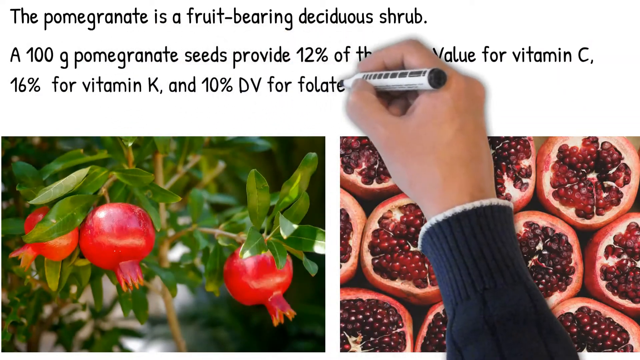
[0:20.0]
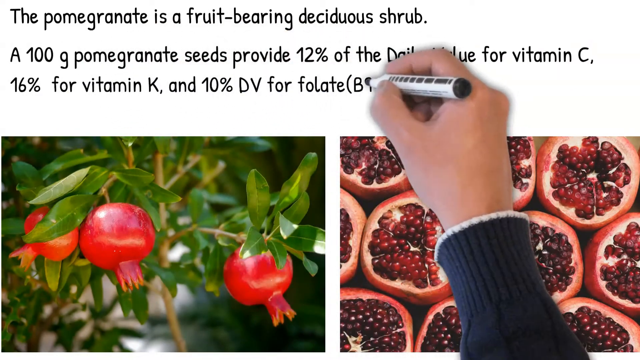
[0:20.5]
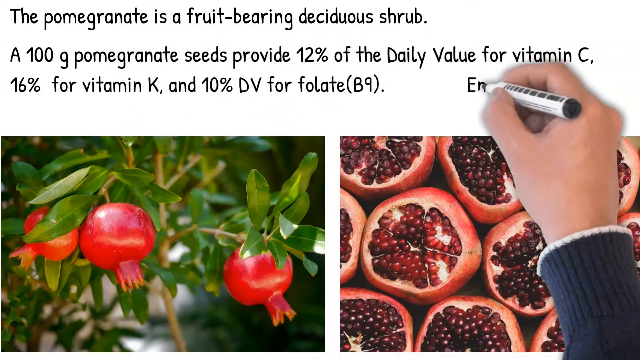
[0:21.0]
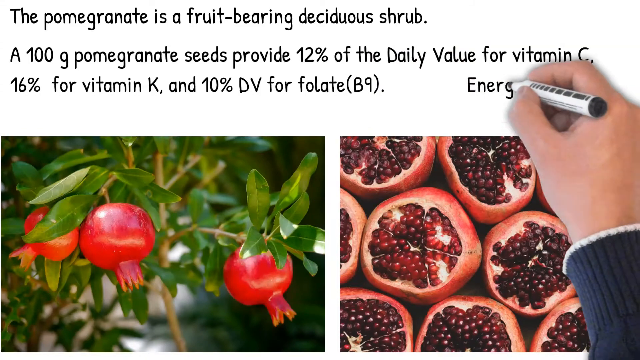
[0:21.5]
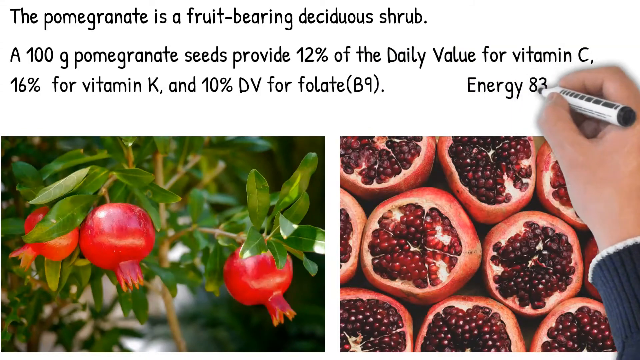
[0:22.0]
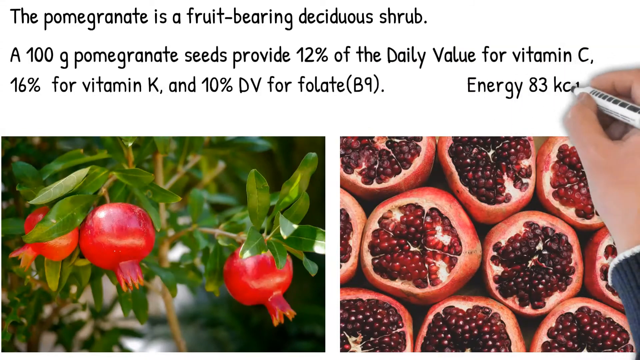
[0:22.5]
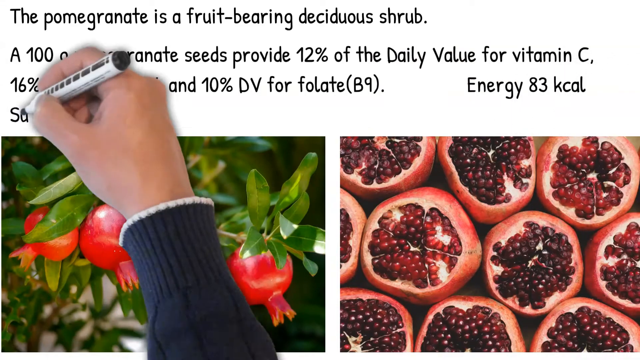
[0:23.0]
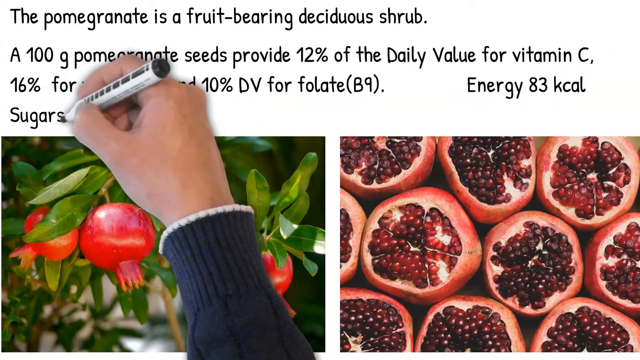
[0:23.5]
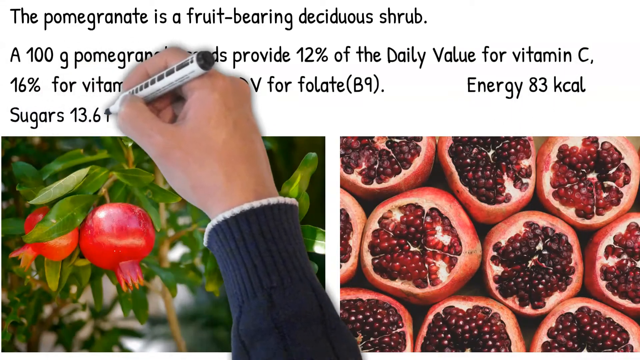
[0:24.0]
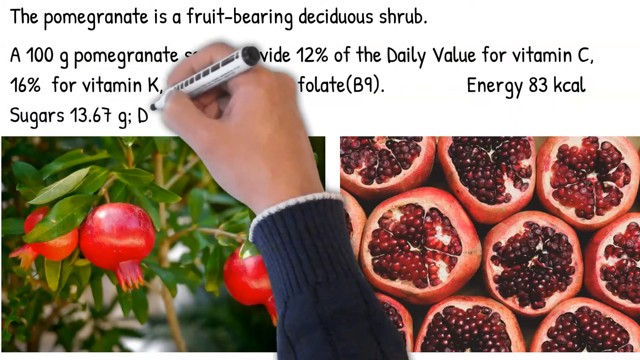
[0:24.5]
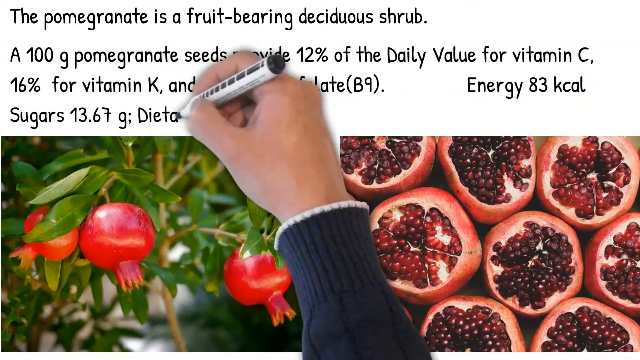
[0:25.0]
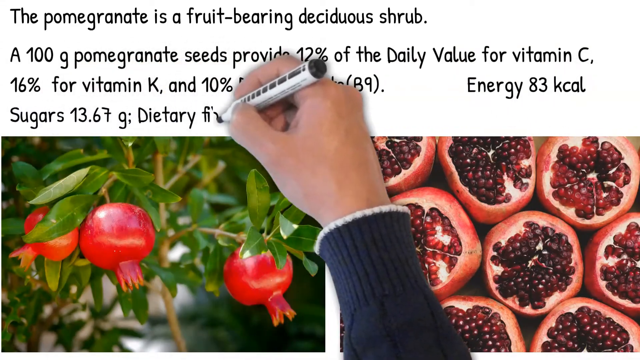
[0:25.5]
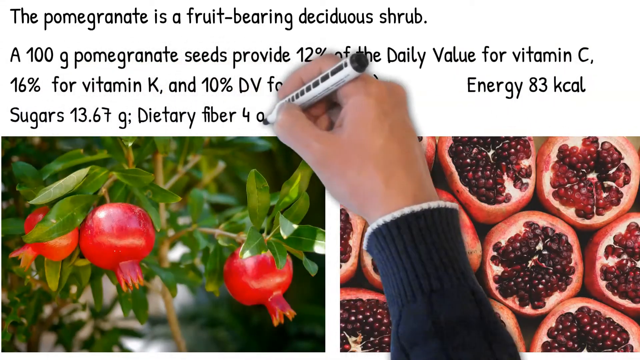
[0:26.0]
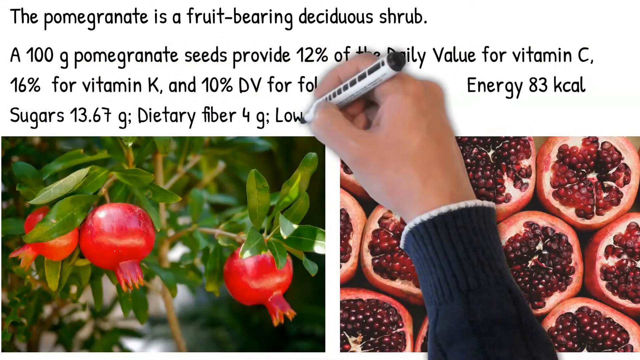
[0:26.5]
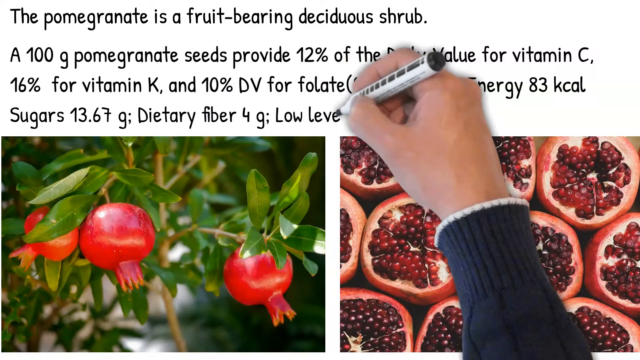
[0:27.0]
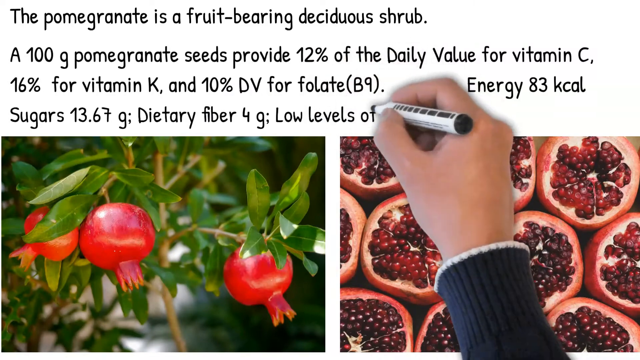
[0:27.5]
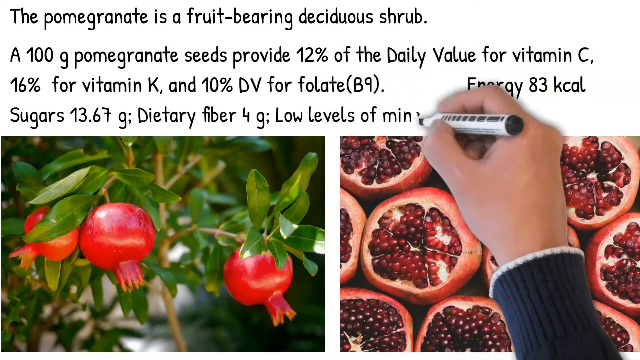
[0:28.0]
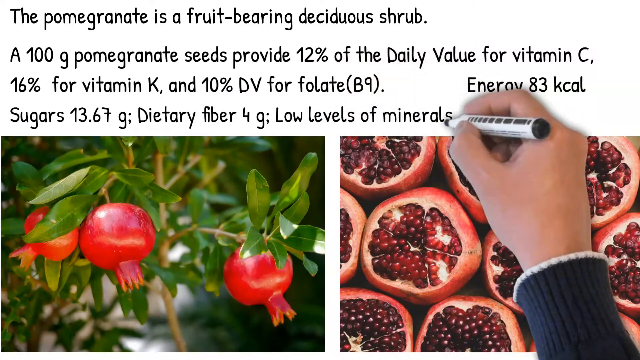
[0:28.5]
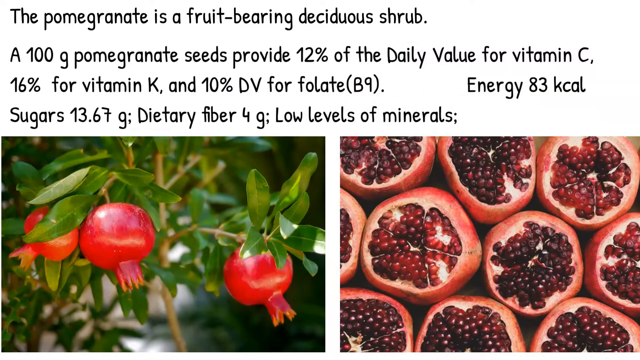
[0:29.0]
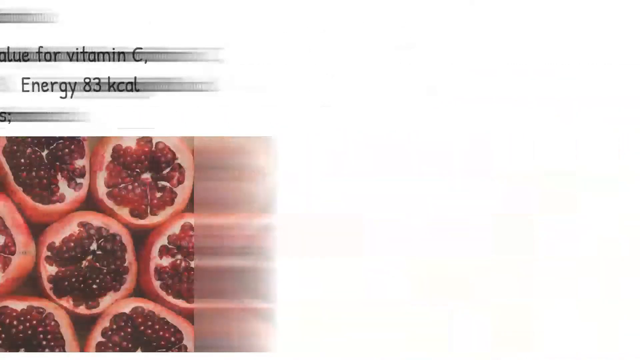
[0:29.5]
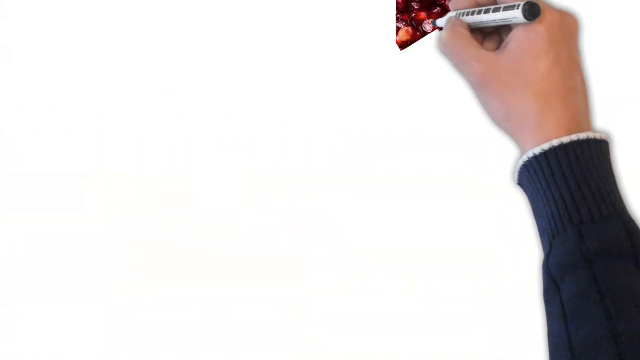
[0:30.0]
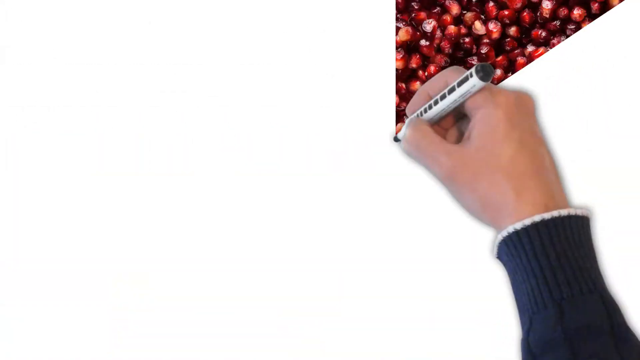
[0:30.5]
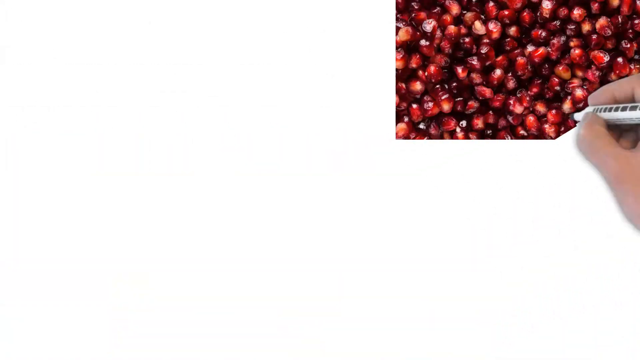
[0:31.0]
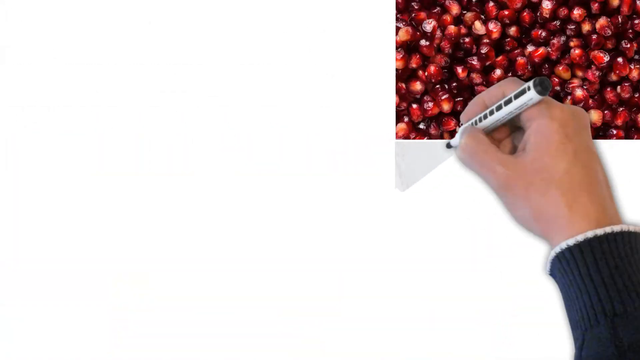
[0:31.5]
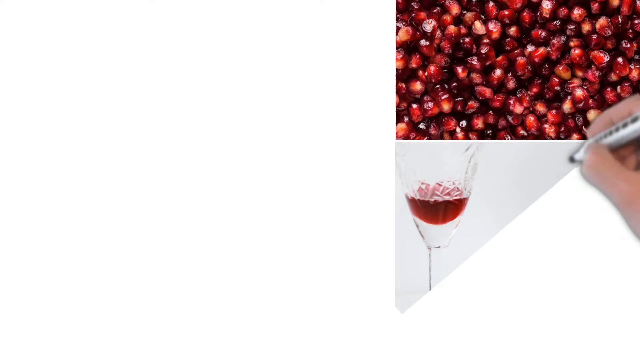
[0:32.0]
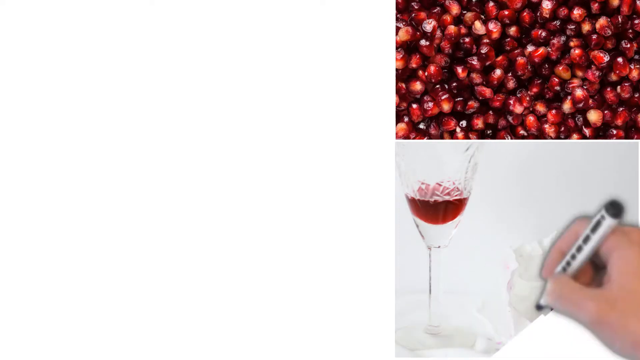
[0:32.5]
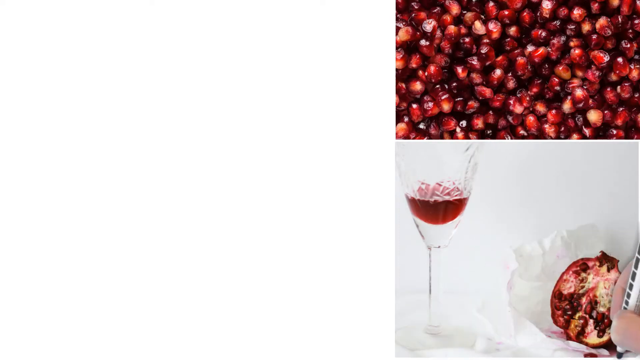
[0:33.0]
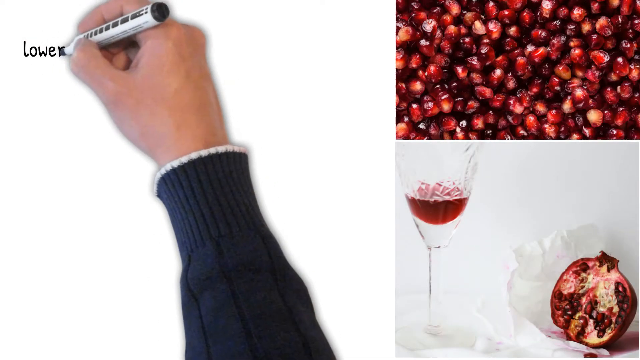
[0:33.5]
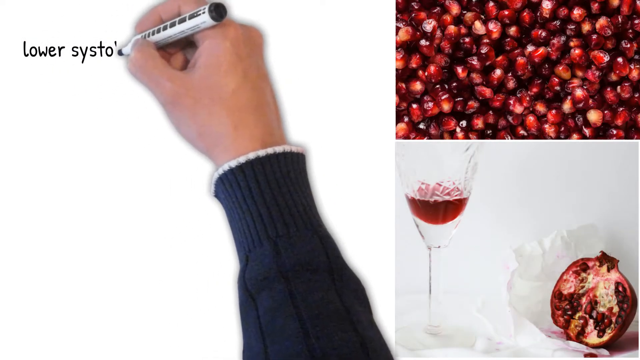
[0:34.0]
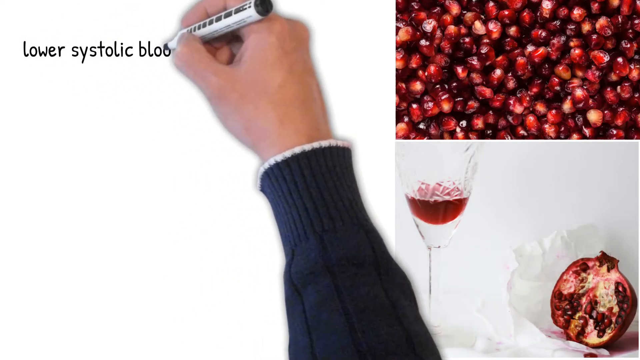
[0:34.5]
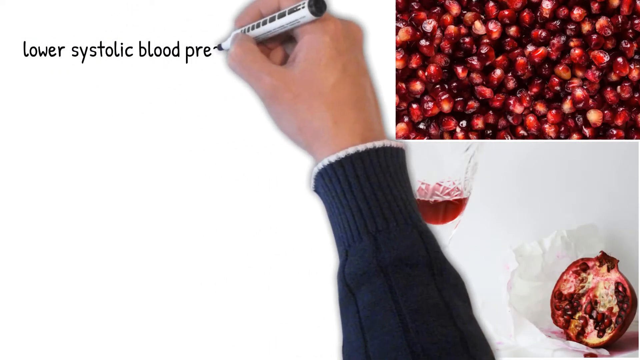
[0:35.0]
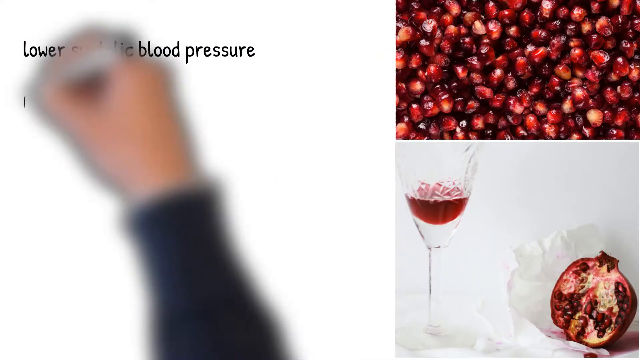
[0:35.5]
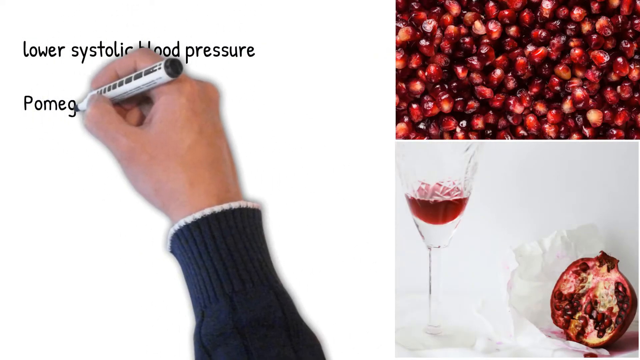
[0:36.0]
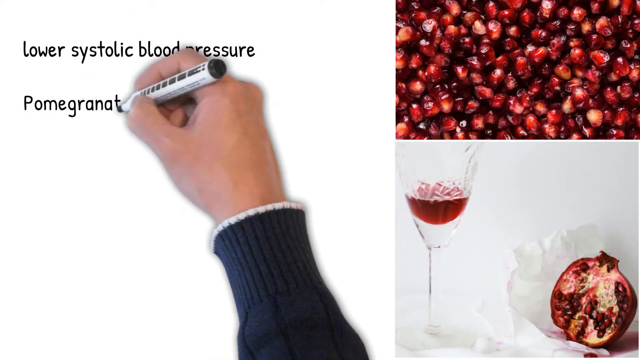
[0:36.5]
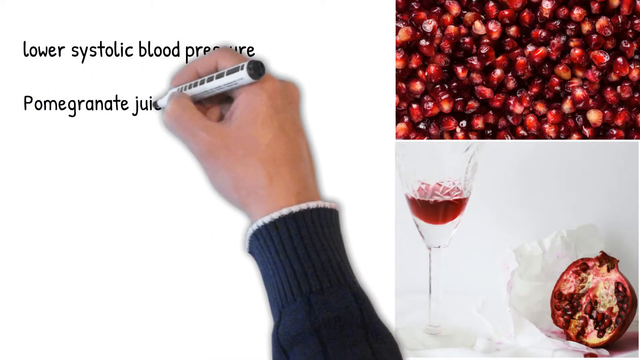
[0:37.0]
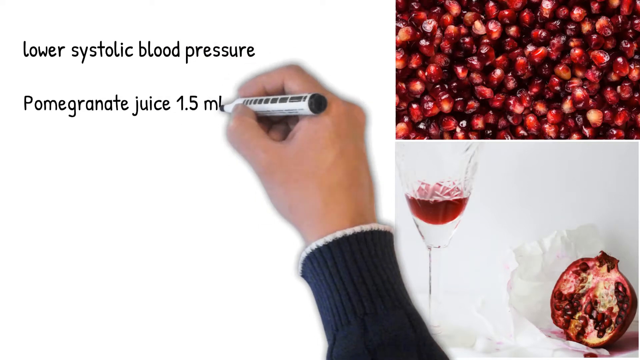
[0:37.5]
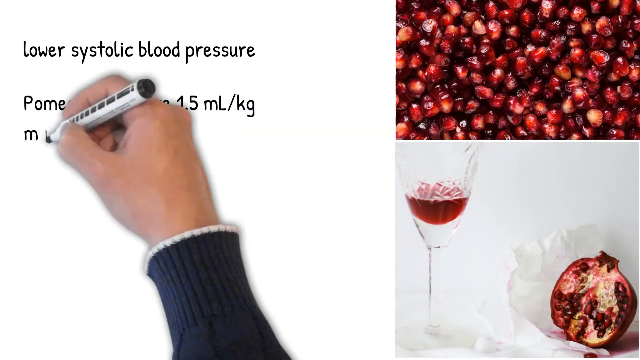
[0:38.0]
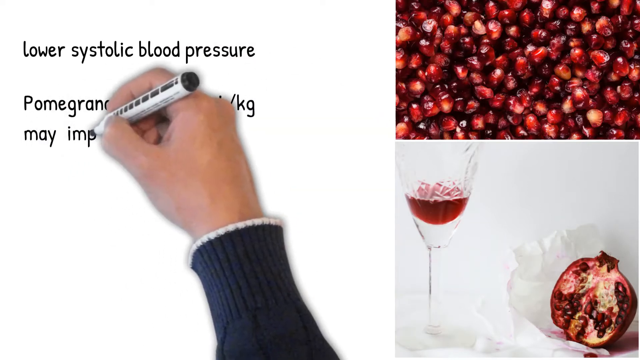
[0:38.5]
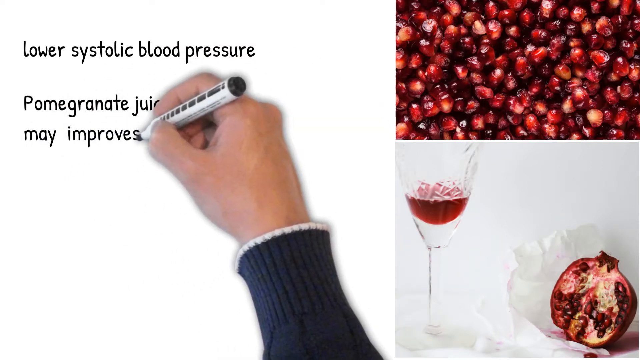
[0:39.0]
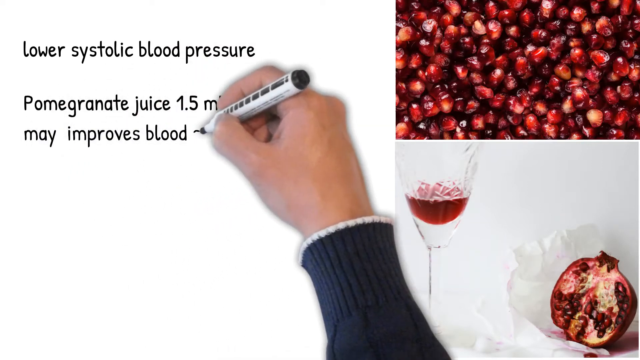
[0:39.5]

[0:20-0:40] The writing continues on the screen, which has text at the top and two photos at the bottom. The hand writes "10% dv for folate" followed by "b9" in parentheses, and toward the right of that same line writes "energy 83 kcal." On the line underneath, it writes "sugars 13.67 grams dietary fiber 4 grams. Low levels of minerals." The scene then shifts to a new screen, still with a white background. The hand seems to draw a photograph of pomegranate seeds in a cluster in the upper right corner, then draws another photograph of a cocktail glass with a cut pomegranate to the right of it. The hand then writes more text, this time on the left side: "lower systolic blood pressure. Pomegranate juice 1.5 milliliters per kilogram" (apparently), followed by another line reading "may improves blood sugar."